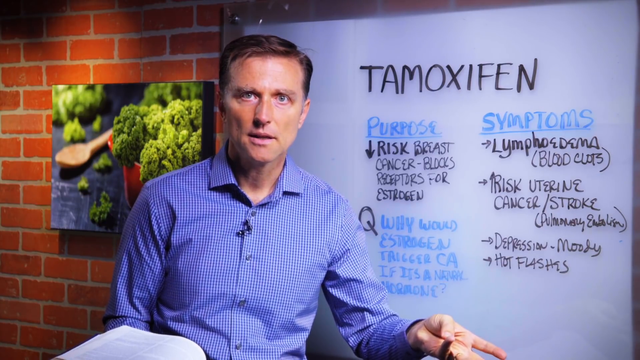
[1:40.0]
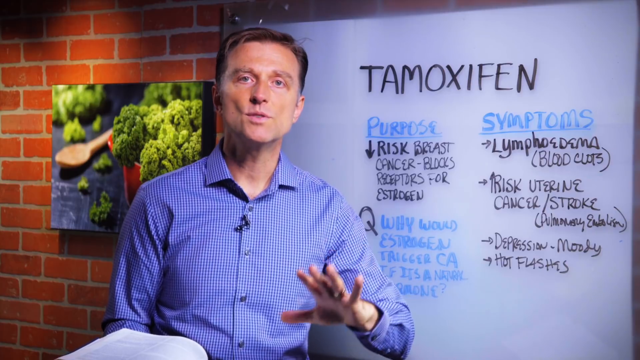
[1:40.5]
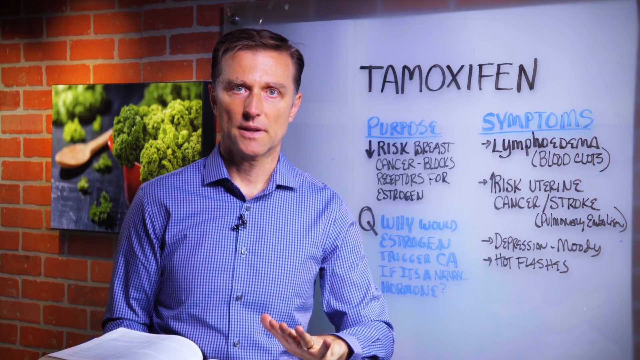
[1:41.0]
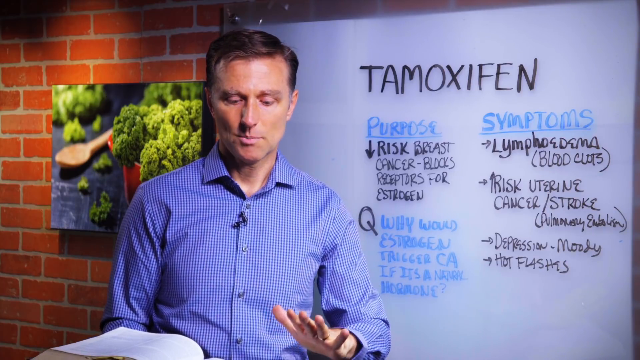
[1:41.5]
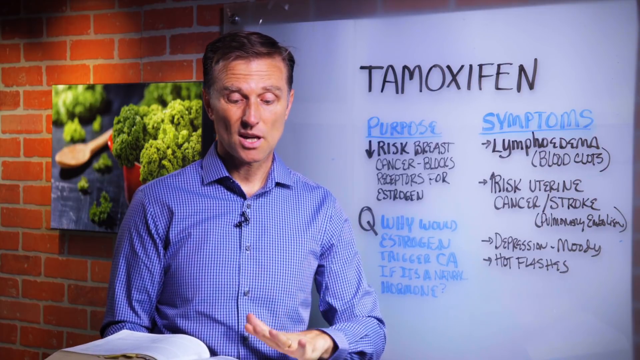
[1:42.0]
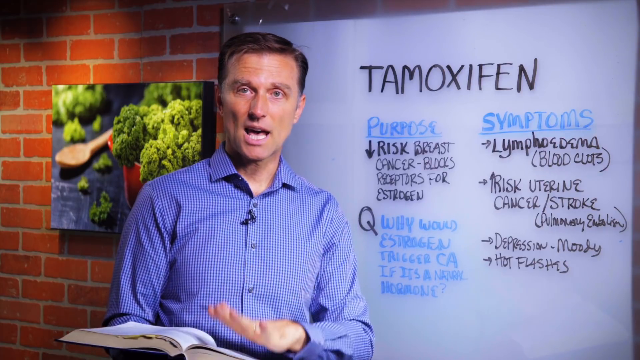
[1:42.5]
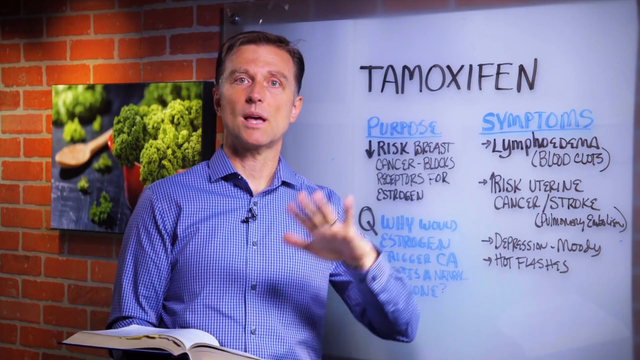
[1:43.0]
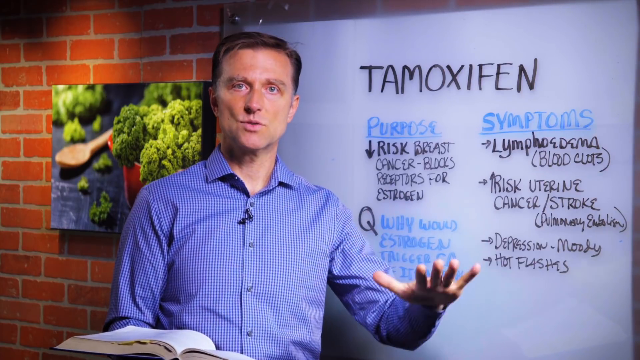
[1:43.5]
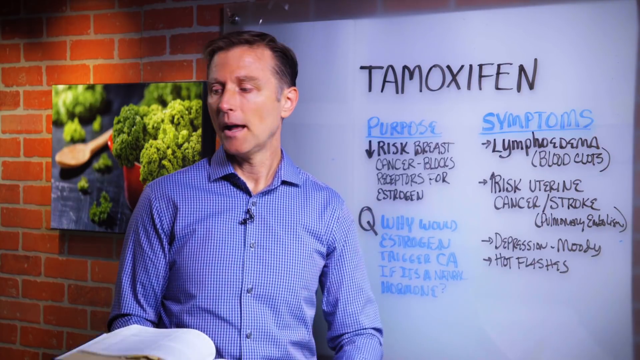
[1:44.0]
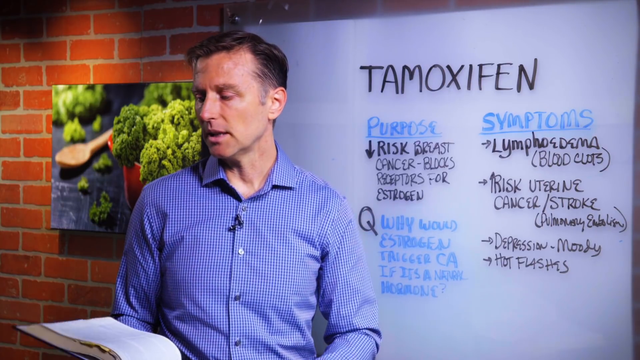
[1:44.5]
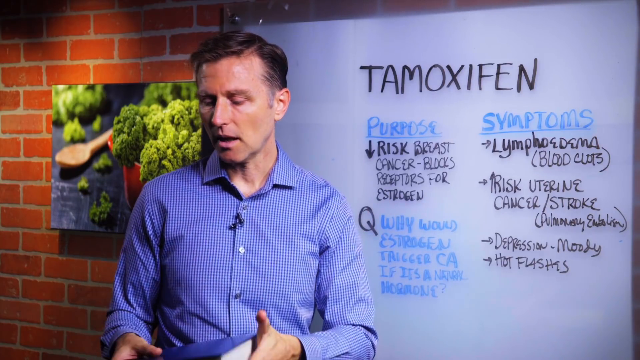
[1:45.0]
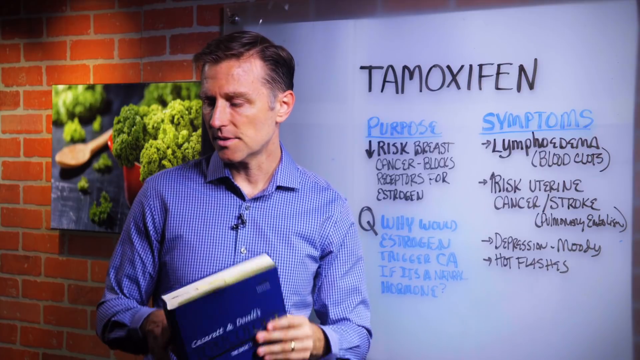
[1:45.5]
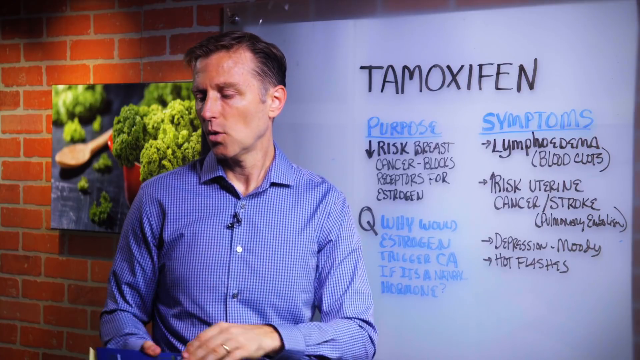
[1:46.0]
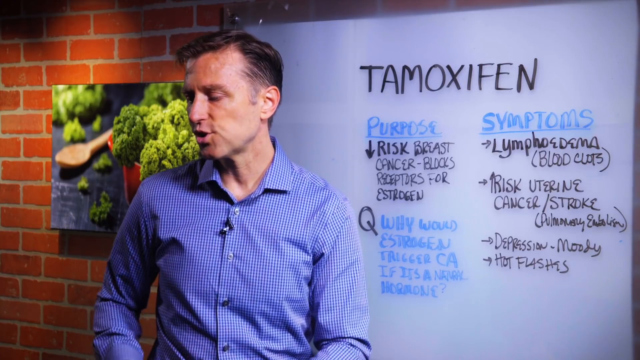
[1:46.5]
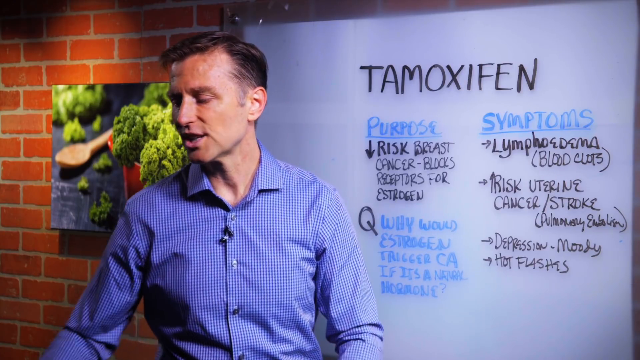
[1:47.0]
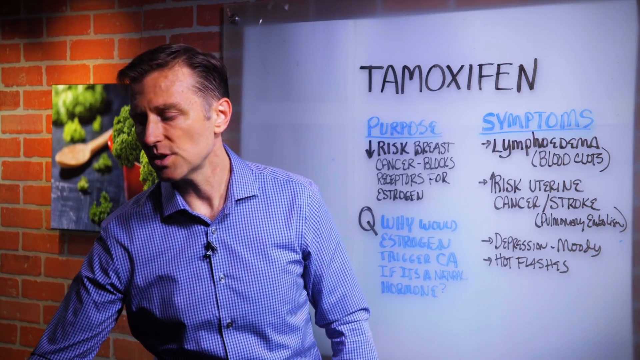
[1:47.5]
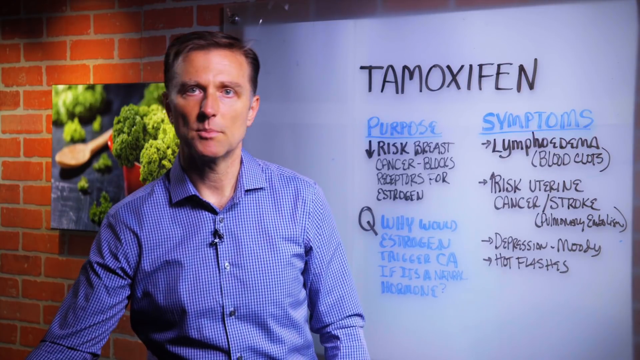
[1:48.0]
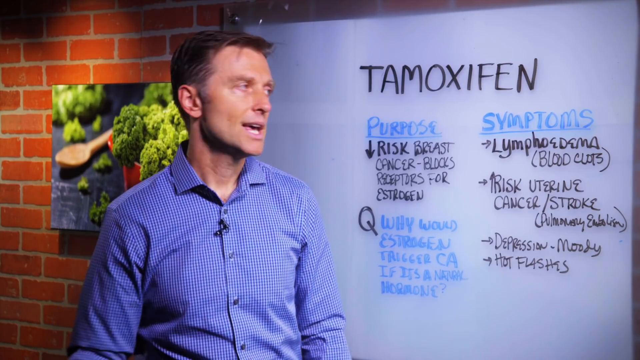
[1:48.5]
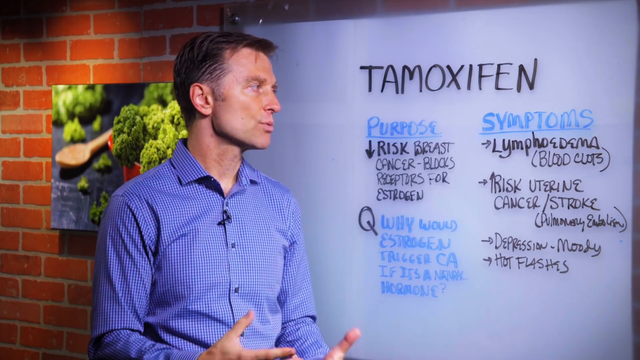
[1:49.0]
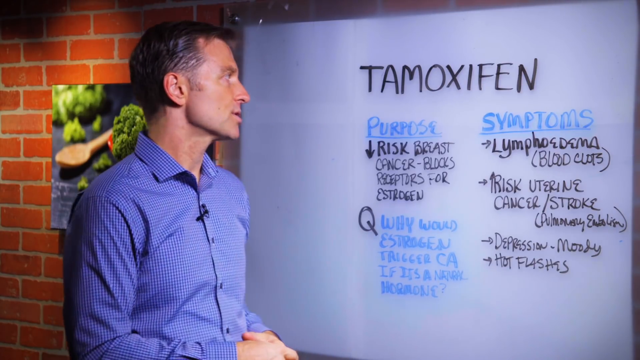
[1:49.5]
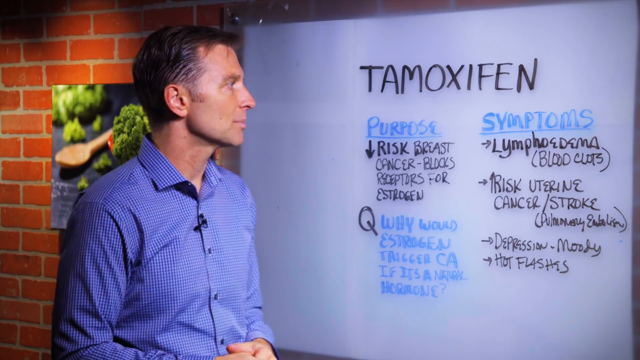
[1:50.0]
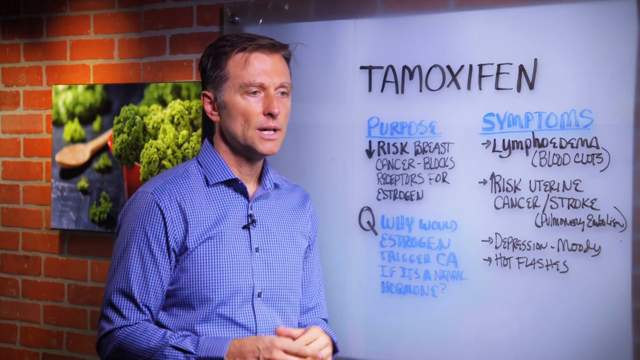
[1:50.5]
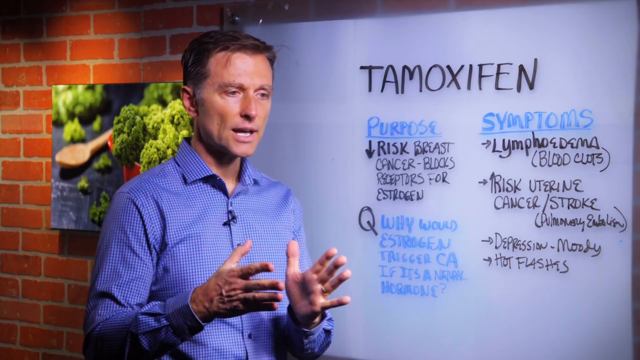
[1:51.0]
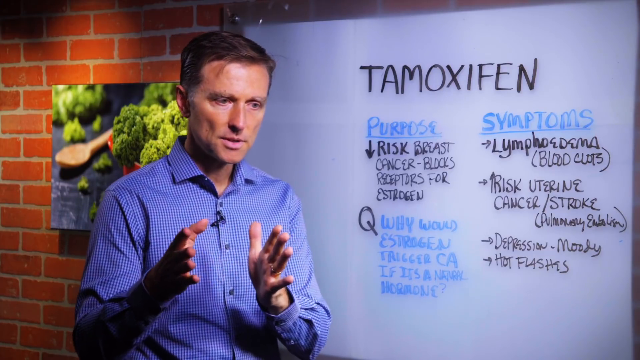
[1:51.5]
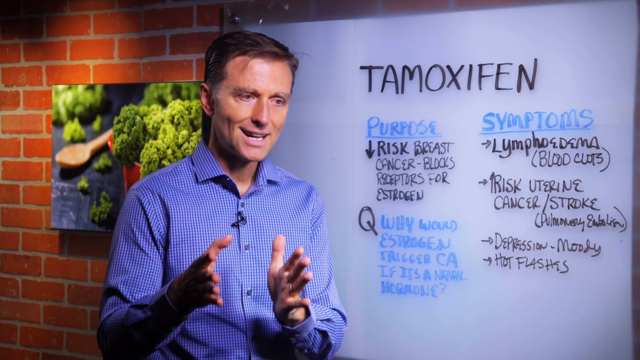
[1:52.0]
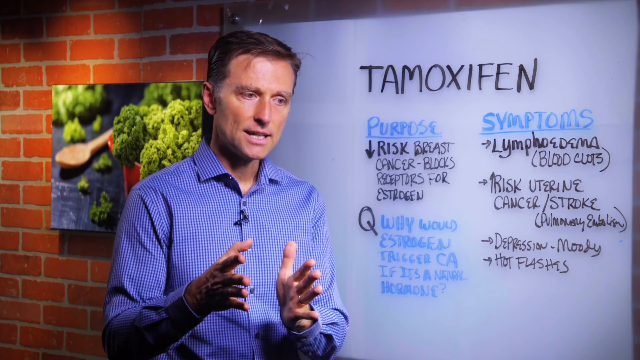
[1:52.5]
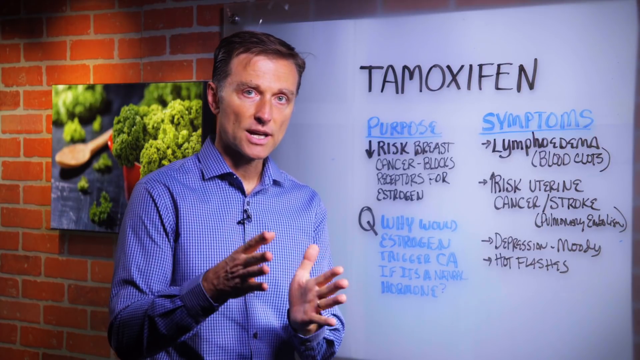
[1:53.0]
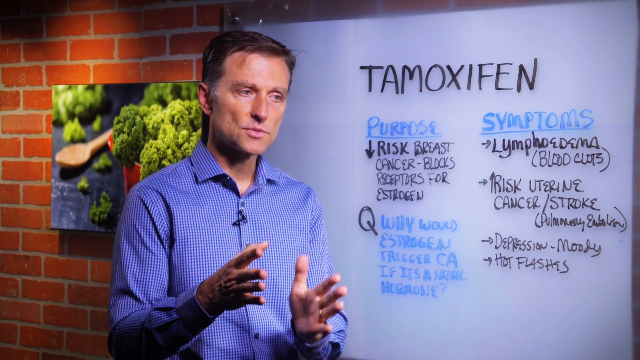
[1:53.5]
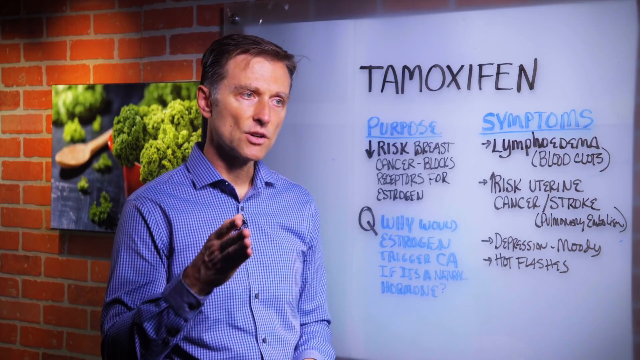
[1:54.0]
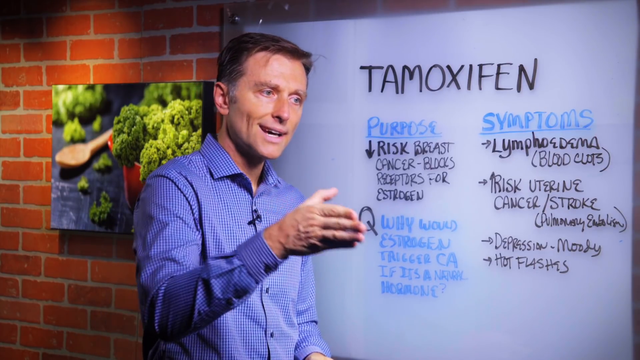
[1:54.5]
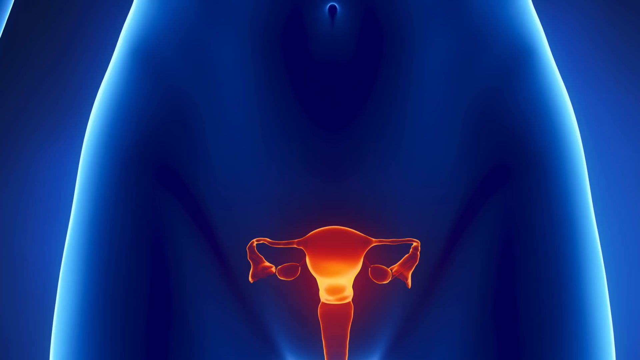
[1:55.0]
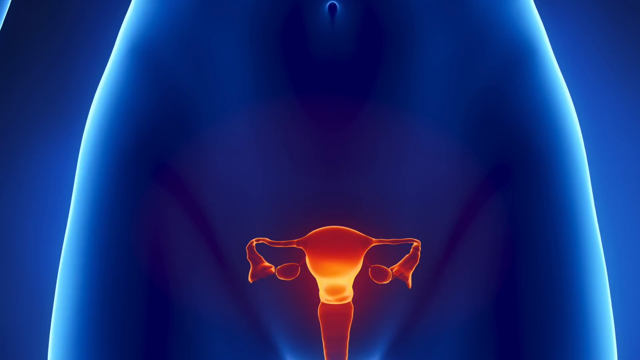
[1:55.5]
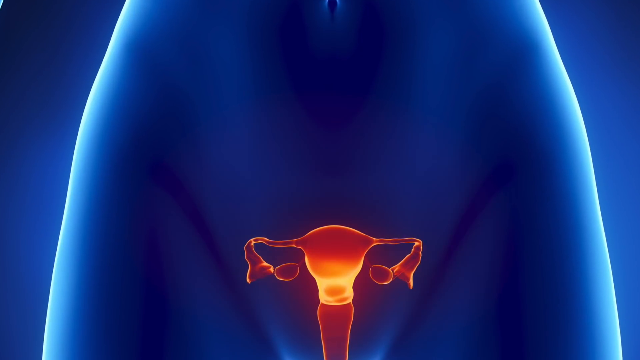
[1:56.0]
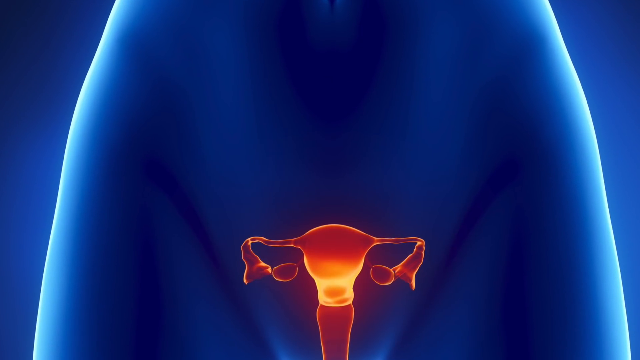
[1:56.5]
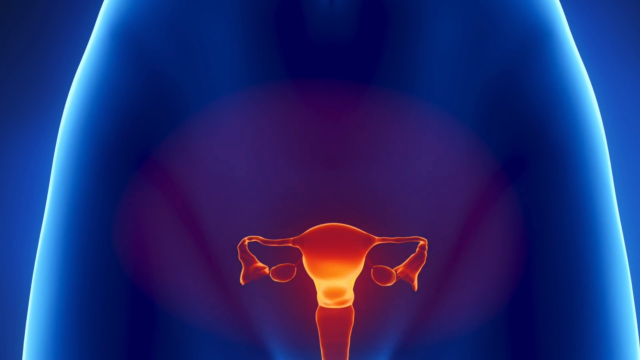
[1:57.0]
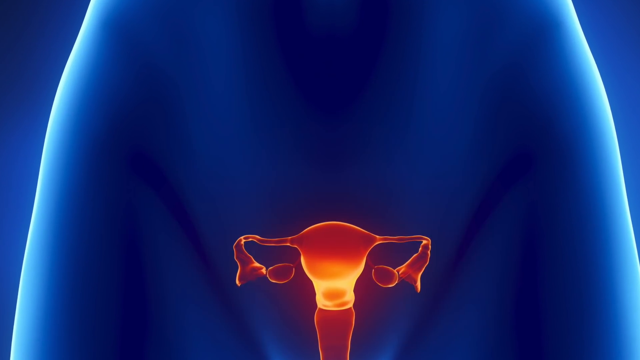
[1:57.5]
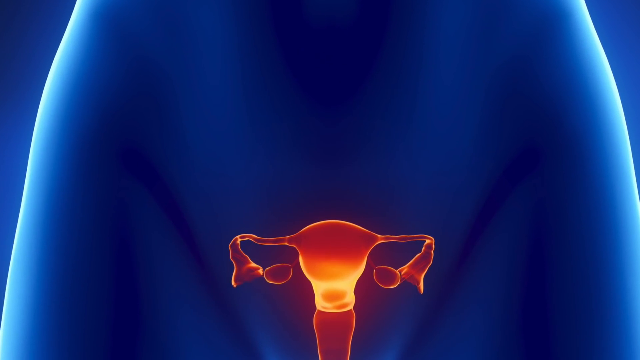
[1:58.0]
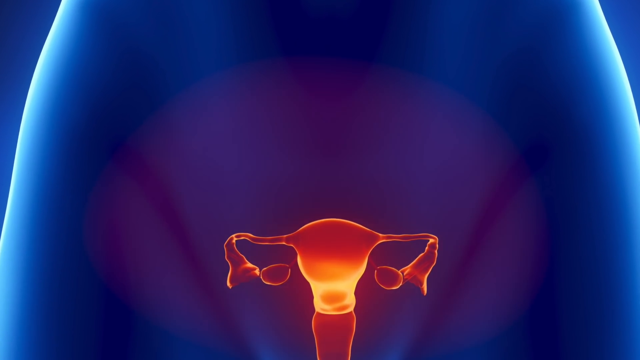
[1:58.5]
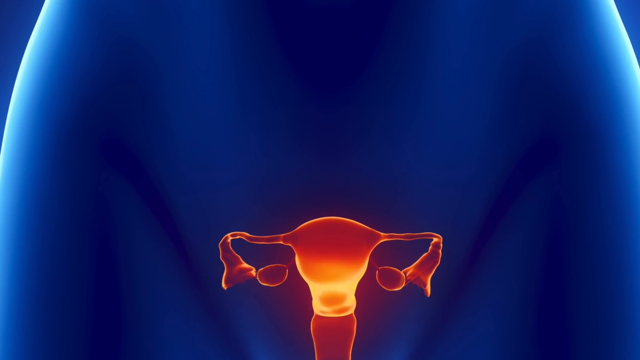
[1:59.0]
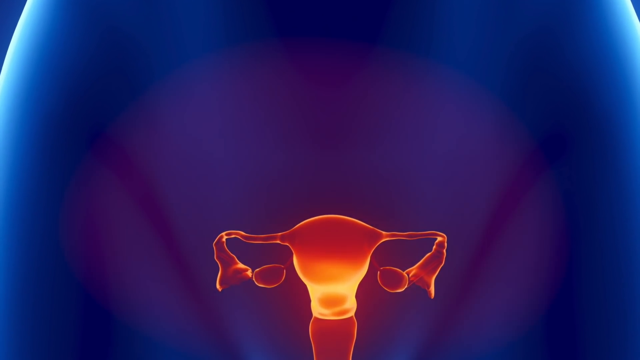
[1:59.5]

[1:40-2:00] A white man with blue eyes and brownish hair, with slightly gray sideburns, wears a long-sleeved blue and white button-down shirt with a small checkered pattern. He stands in front of a whiteboard that says "tamoxifen", "purpose", "reduce risk of breast cancer", "blocks receptors for estrogen", "question, why would estrogen trigger CA if it's a normal hormone?" and "symptoms, lymphedema, blood clots, increased risk of uterine cancer / stroke, pulmonary embolism, depression, moody, hot flashes". To his left is a canvas photo of a bunch of broccoli in an orange Dutch oven with a wooden spoon, and a lot more broccoli sort of spilled out all over. He holds a toxicology textbook in his right hand, touches it with his left, and talks. He looks back at the whiteboard, and then a figure appears, like a cartoon of the ovaries and the female reproductive system with the uterus.